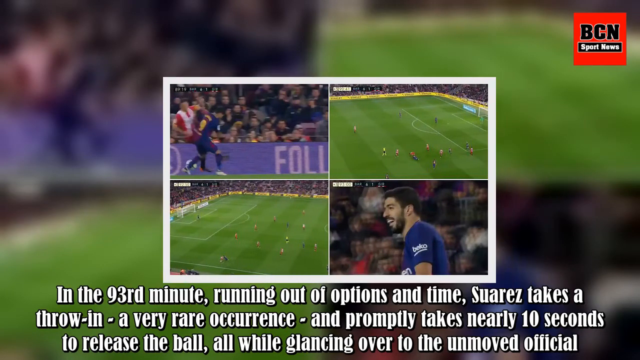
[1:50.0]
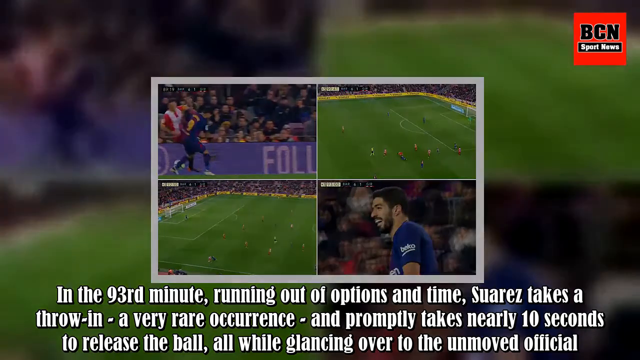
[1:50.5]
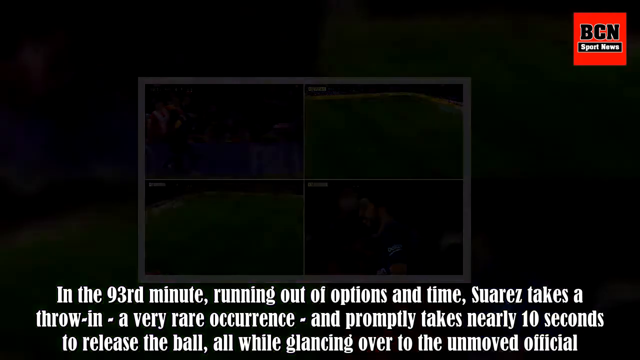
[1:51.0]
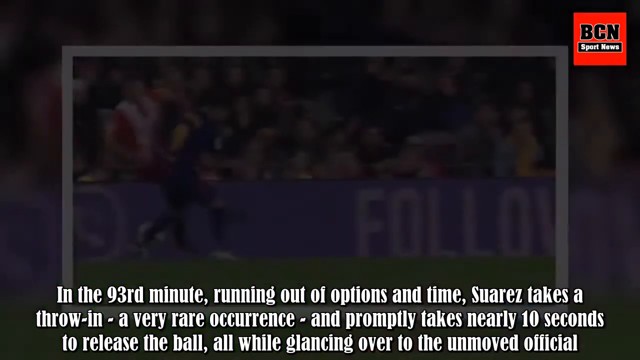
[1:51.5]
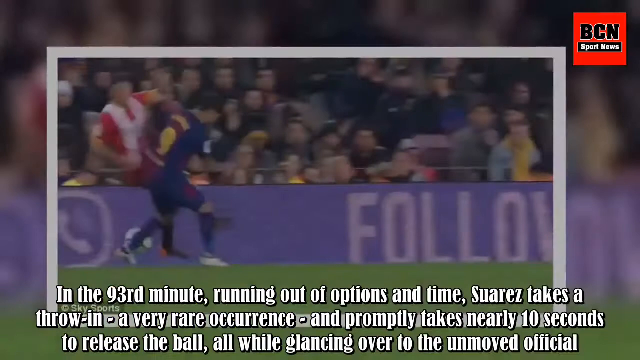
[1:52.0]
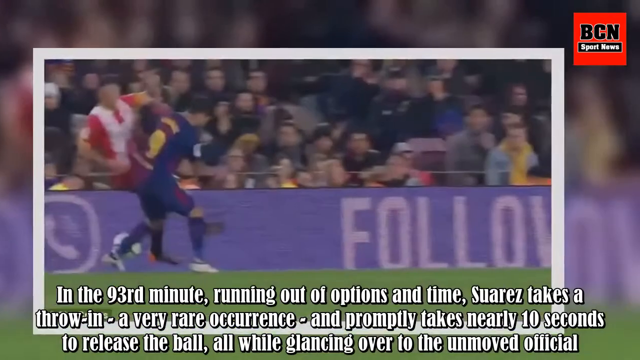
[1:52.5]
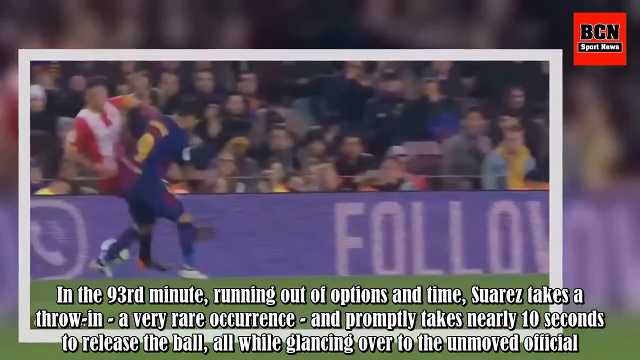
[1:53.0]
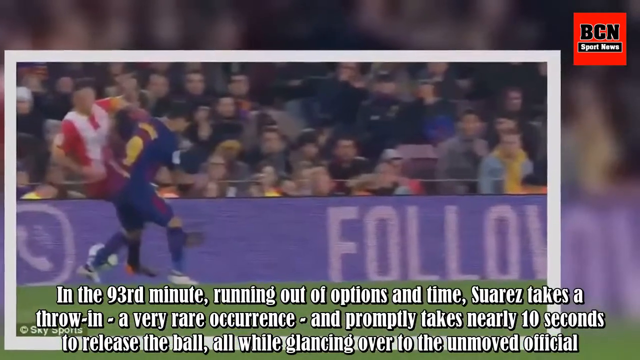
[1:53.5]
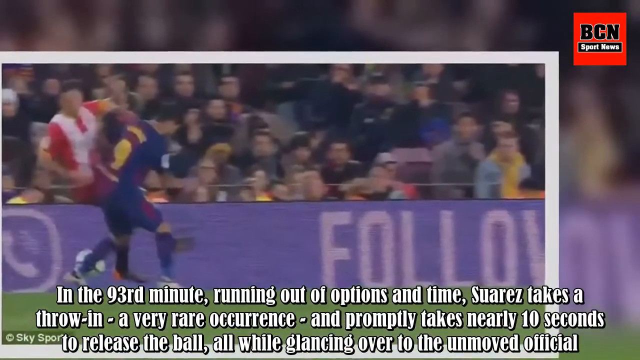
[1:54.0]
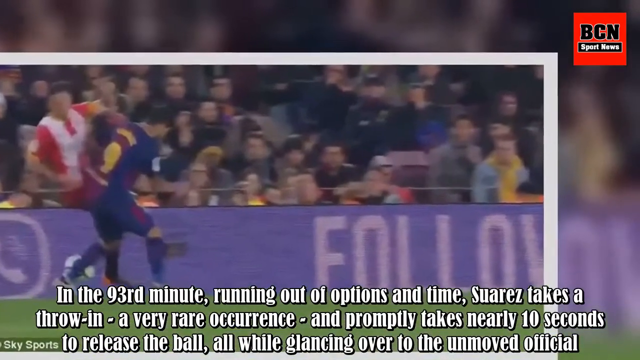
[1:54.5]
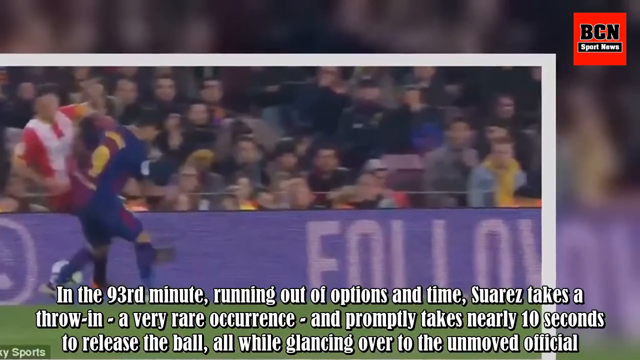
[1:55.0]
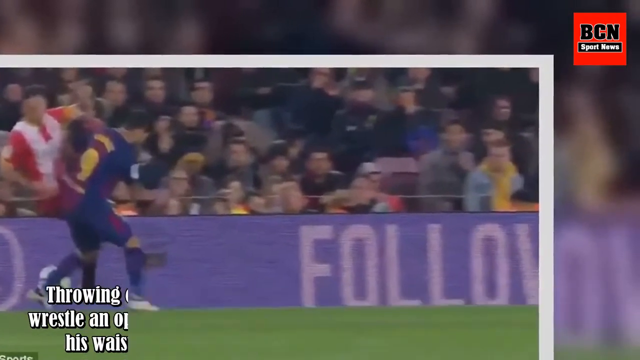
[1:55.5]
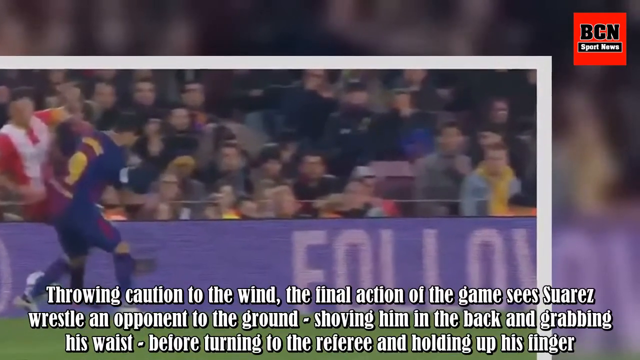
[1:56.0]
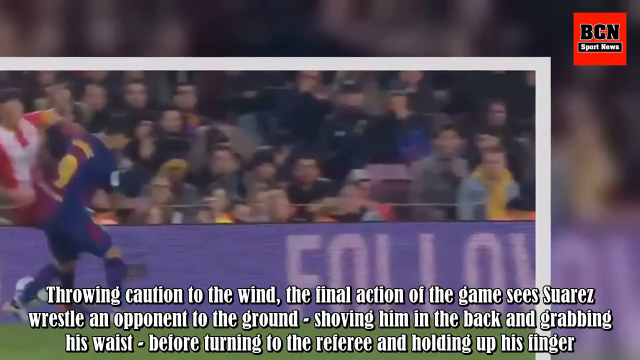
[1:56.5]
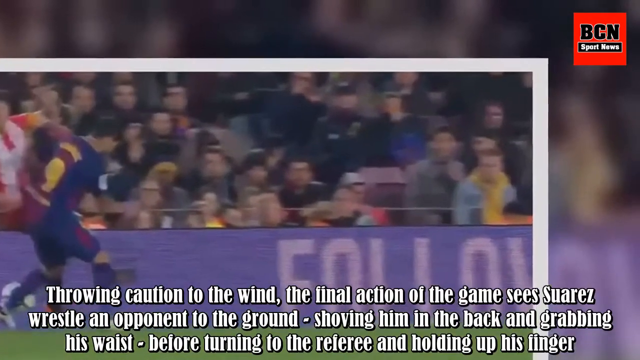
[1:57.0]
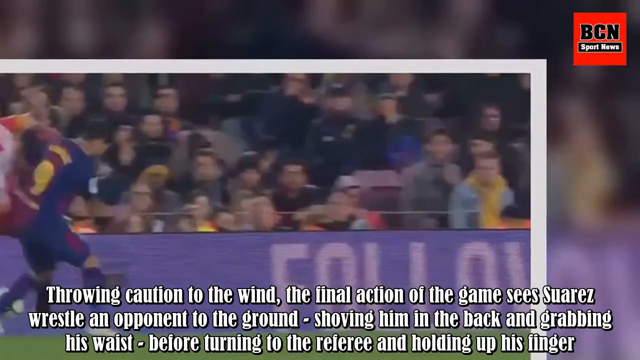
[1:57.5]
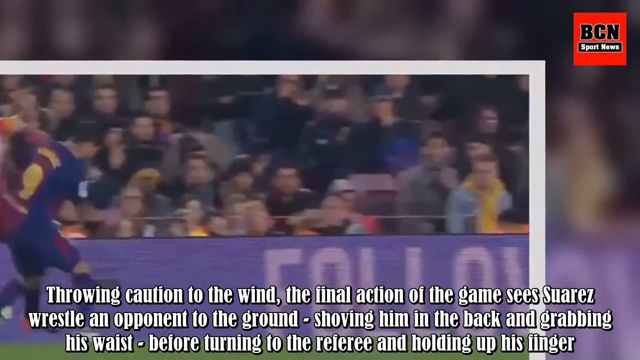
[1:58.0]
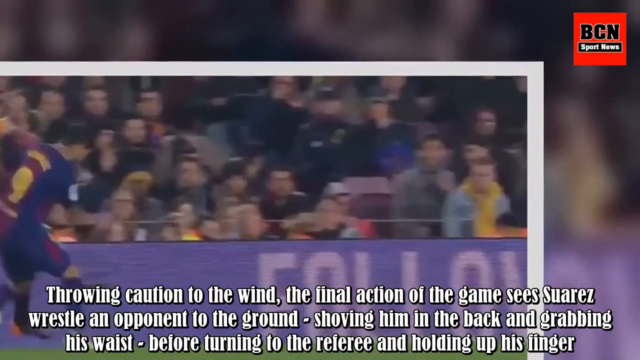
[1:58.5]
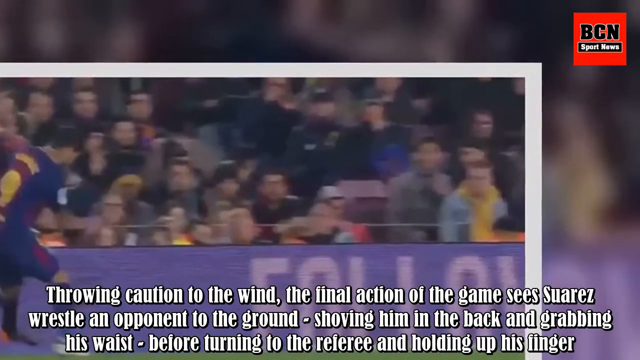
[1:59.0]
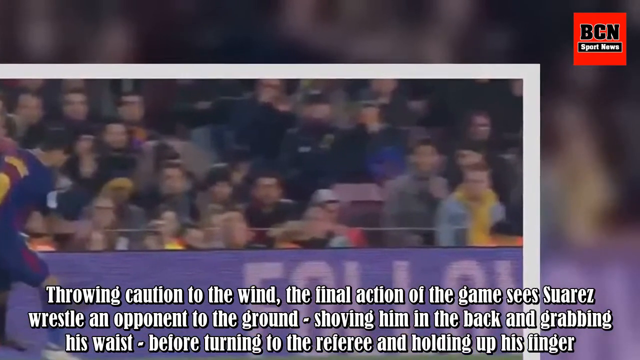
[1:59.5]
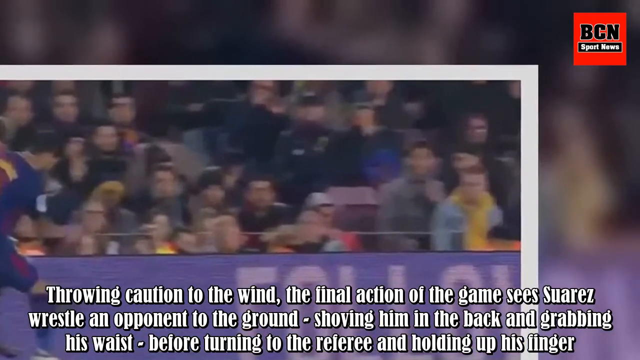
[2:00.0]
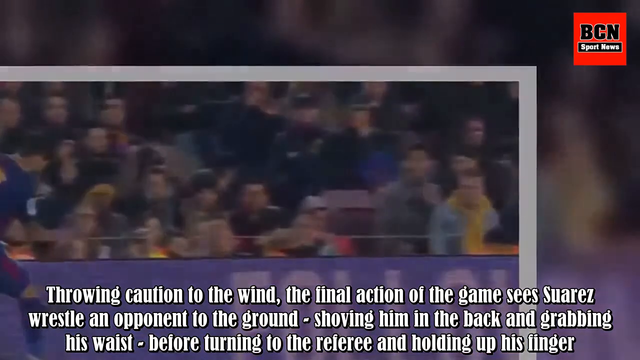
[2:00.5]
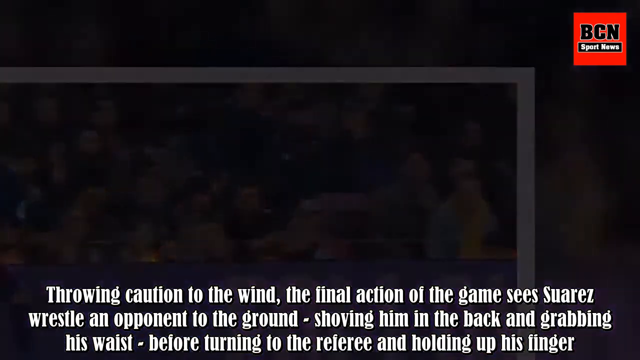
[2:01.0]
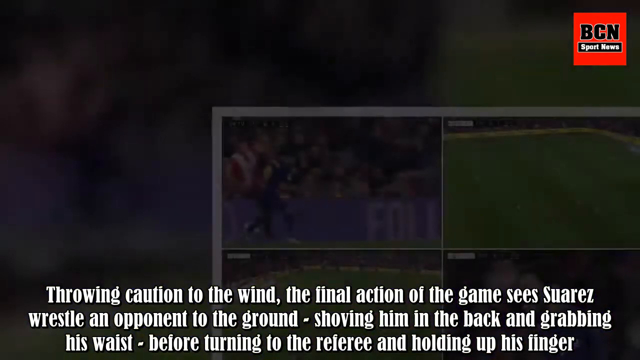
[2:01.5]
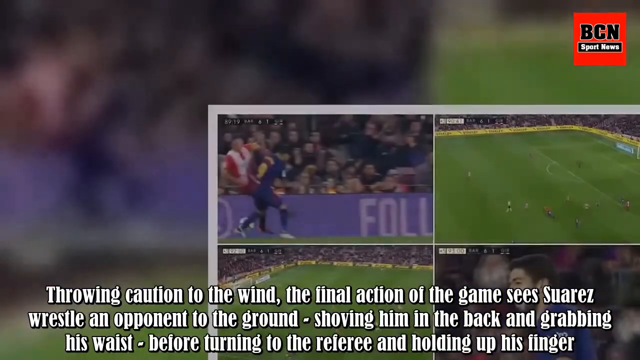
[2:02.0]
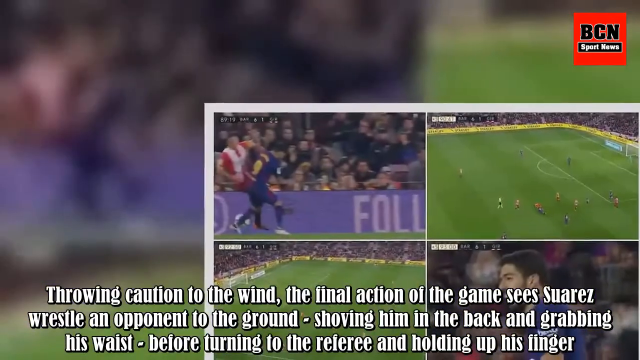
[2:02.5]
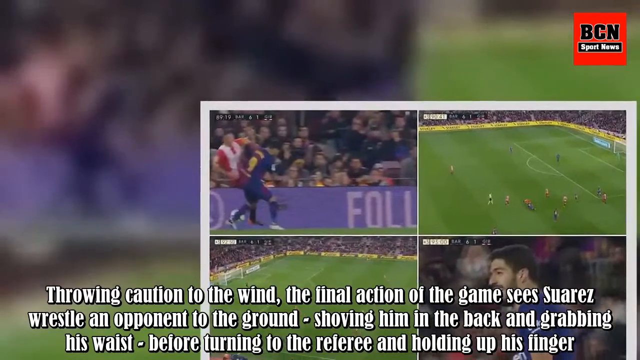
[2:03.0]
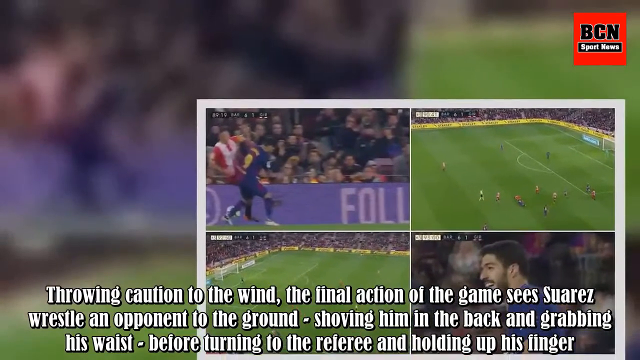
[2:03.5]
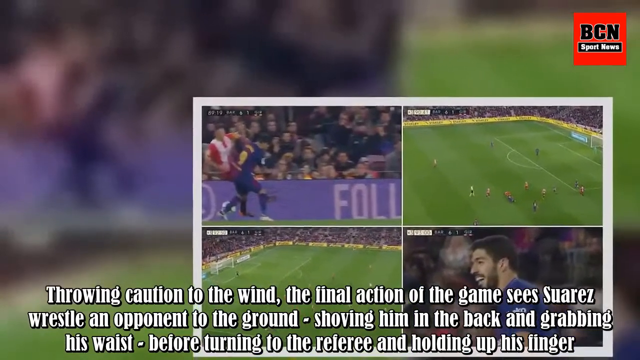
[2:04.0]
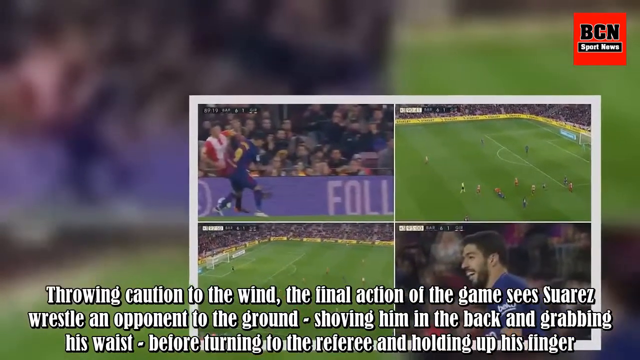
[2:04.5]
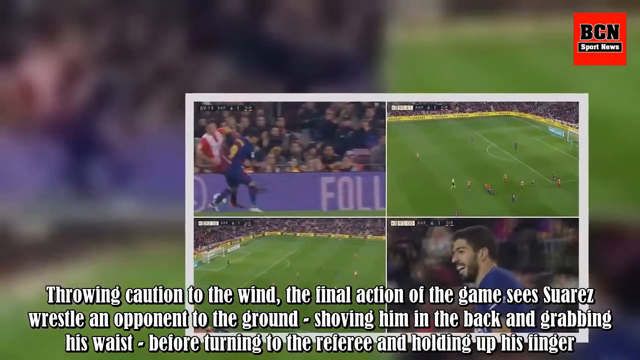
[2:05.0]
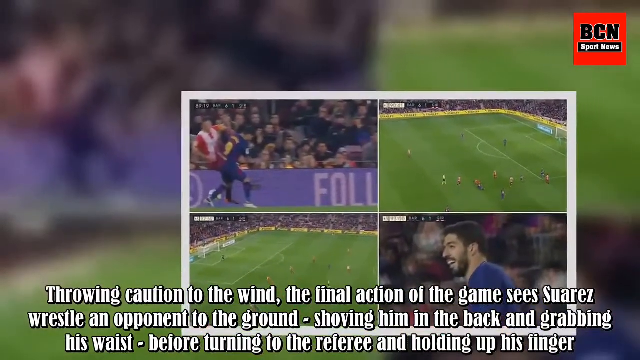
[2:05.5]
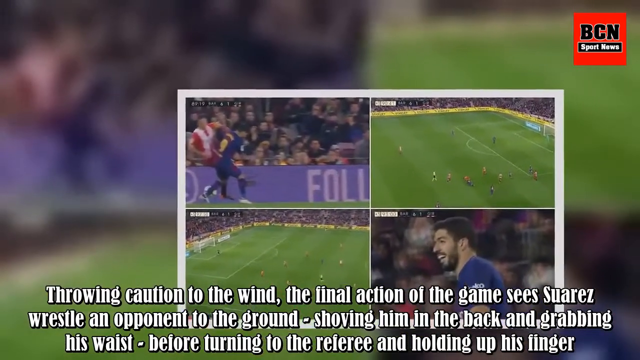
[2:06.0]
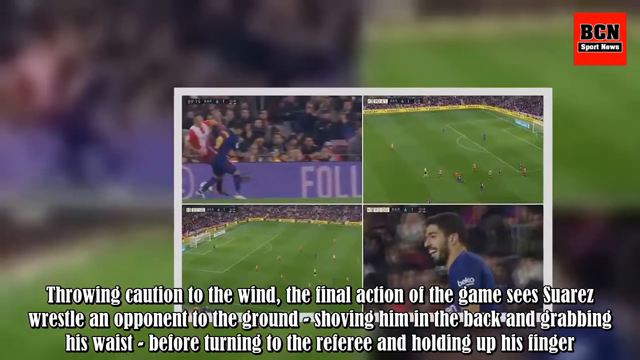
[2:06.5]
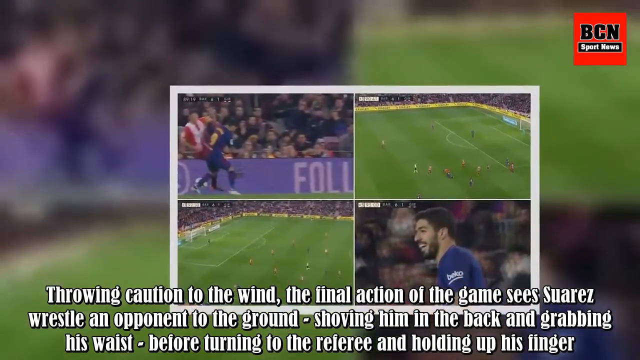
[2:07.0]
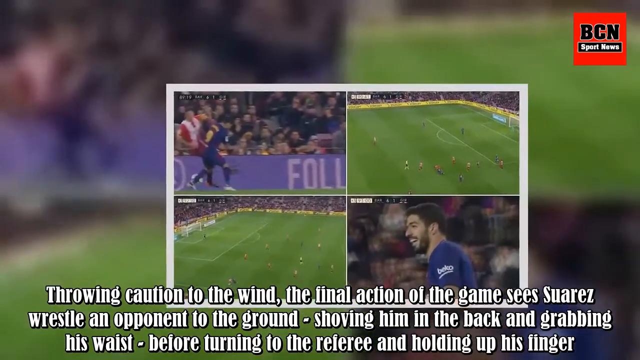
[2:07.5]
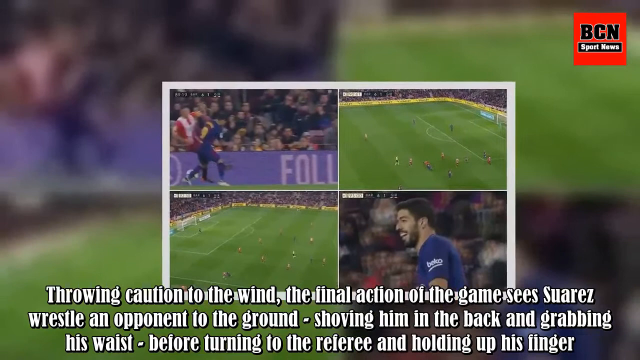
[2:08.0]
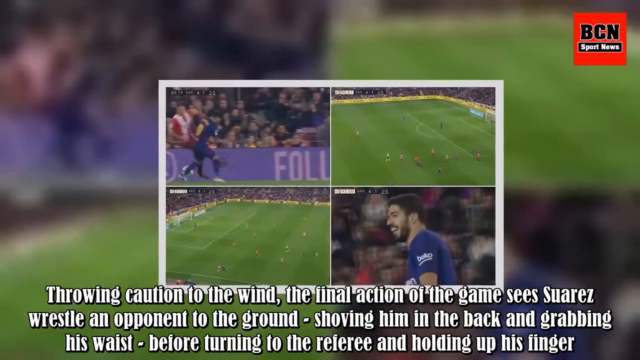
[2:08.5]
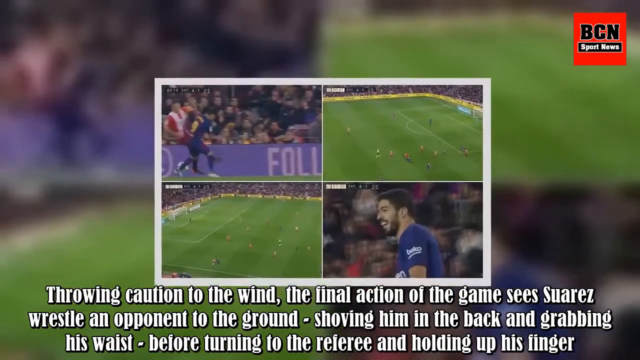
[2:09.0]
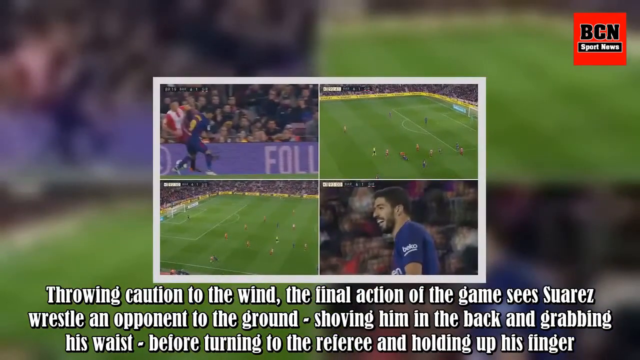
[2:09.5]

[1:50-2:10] A red box reads "BCN Sports News." In the center of the screen, four different pictures are collaged together, apparently showing a soccer game or event. Text at the bottom reads "In the 93rd minute, running out of options and time, Suarez takes a throw-in, a very rare occurrence, but promptly takes nearly 10 seconds to release the ball, all while glancing over to the unmoved official." The camera begins zooming in on a picture, primarily toward the spectators and away from the event between the two players. Text then reads "Throwing caution to the wind, the final action of the game sees Suarez wrestle an opponent to the ground, shoving him in the back and grabbing his waist before turning to the referee and holding up his finger." The screen then begins to put together the four collaged pictures seen at the beginning.